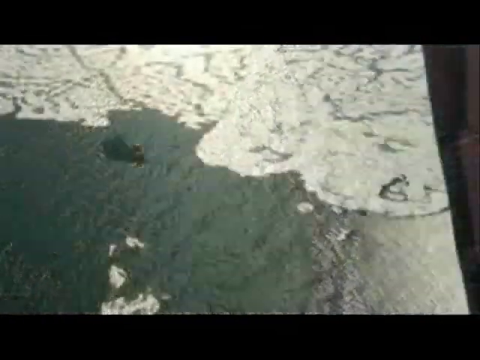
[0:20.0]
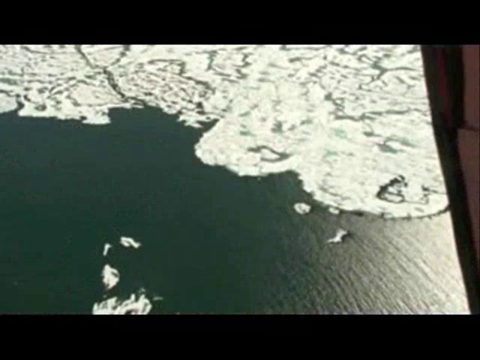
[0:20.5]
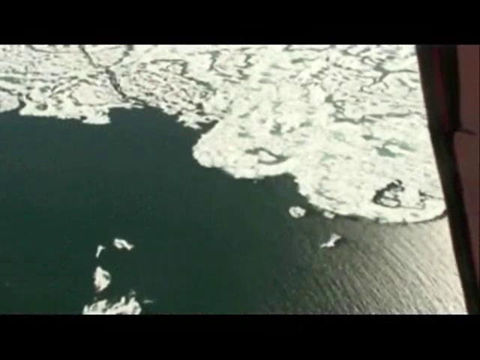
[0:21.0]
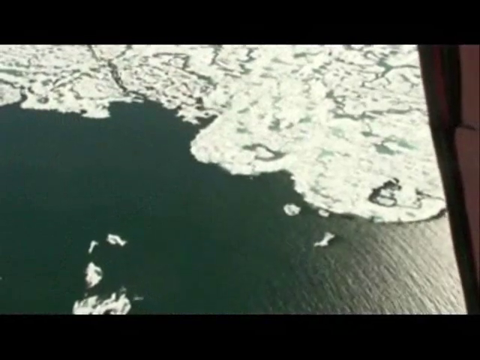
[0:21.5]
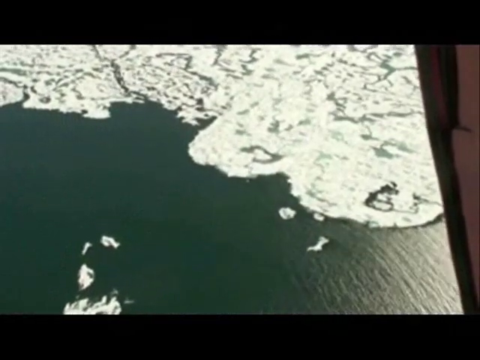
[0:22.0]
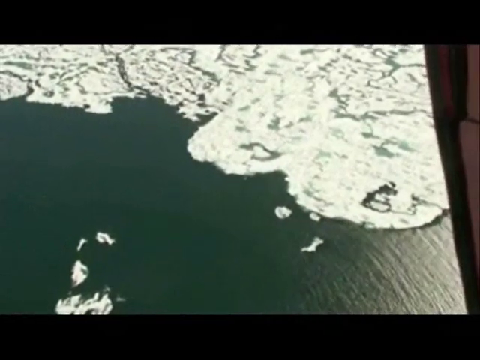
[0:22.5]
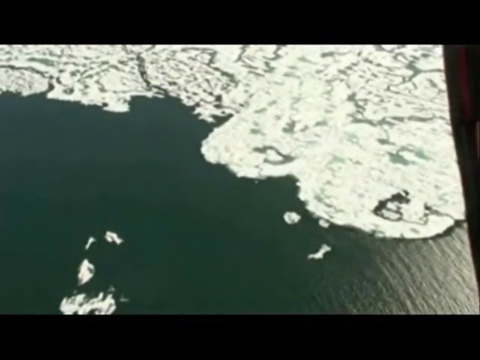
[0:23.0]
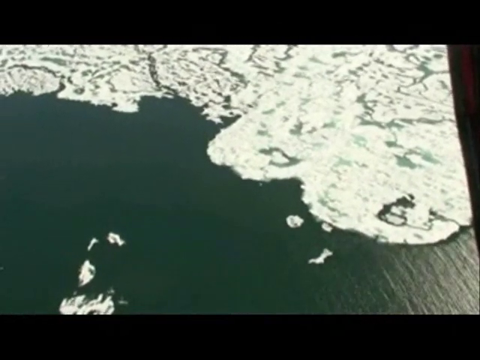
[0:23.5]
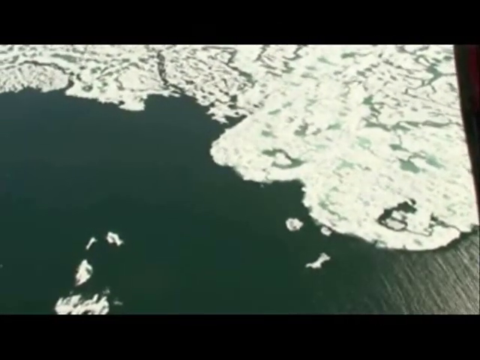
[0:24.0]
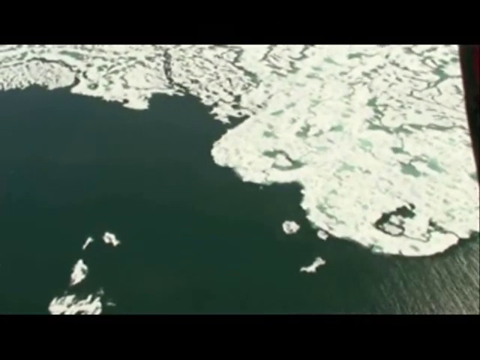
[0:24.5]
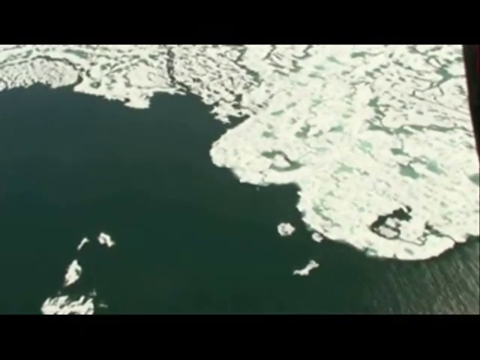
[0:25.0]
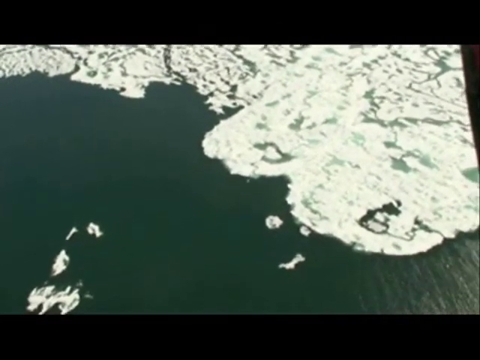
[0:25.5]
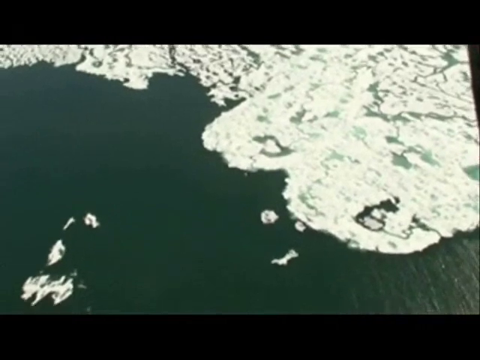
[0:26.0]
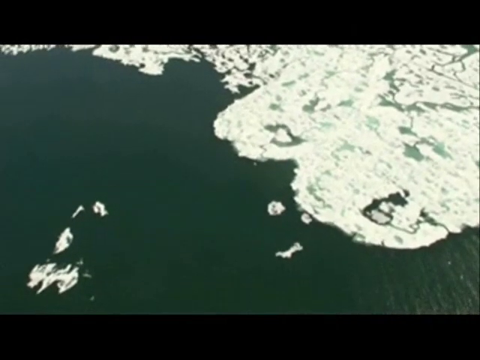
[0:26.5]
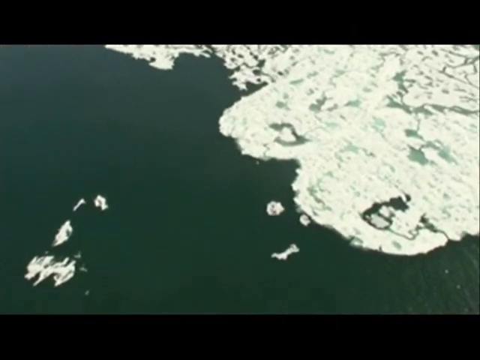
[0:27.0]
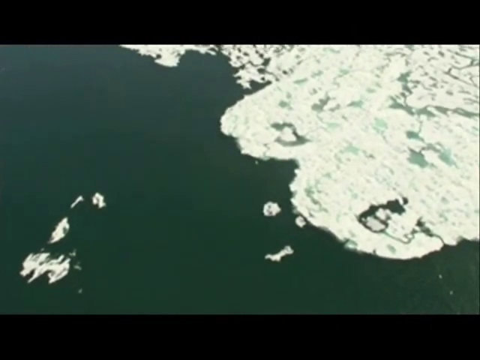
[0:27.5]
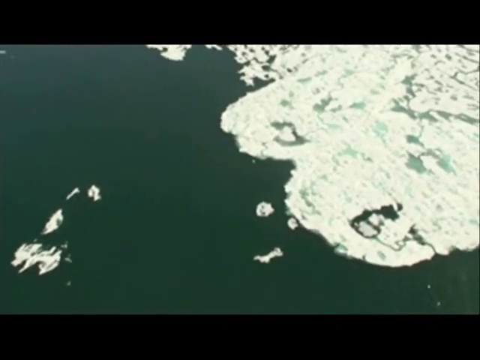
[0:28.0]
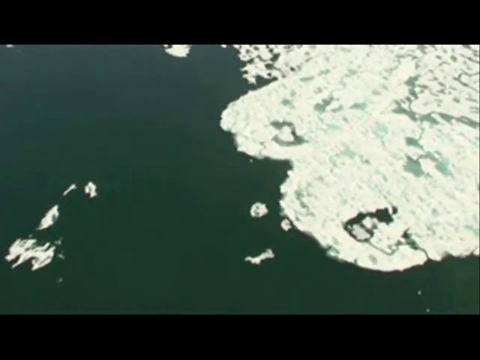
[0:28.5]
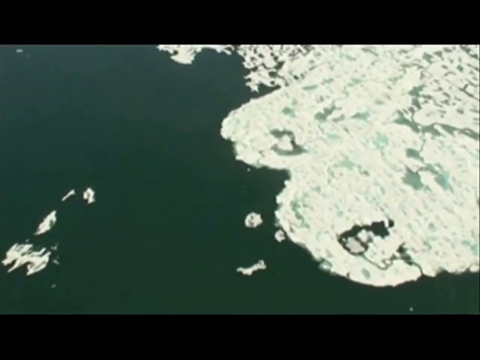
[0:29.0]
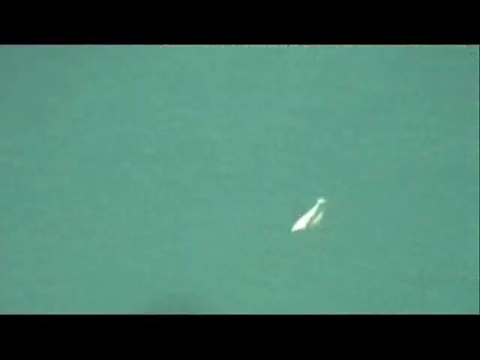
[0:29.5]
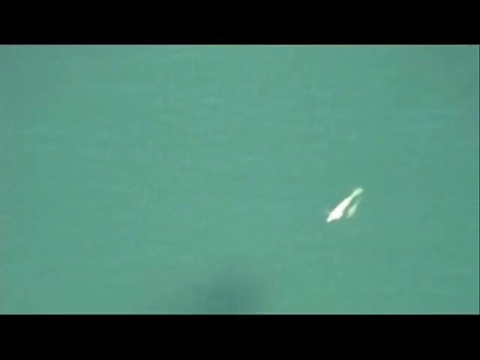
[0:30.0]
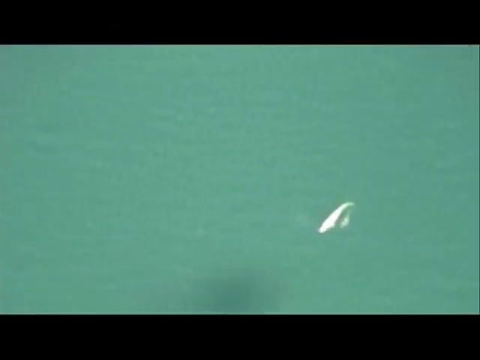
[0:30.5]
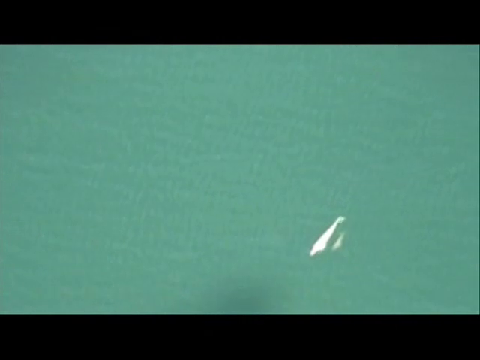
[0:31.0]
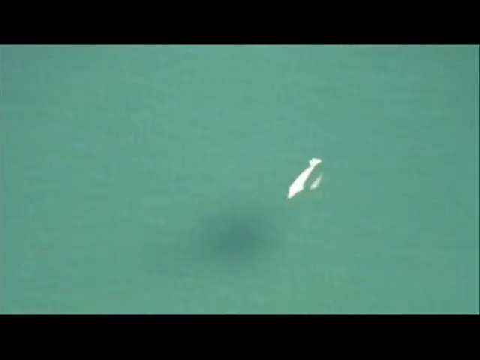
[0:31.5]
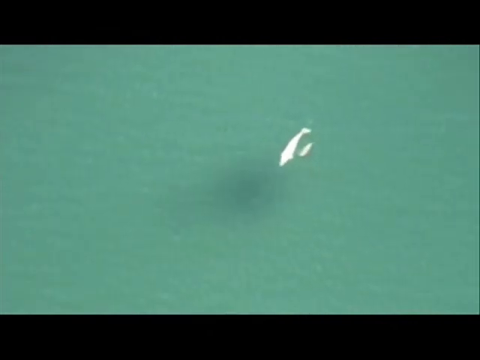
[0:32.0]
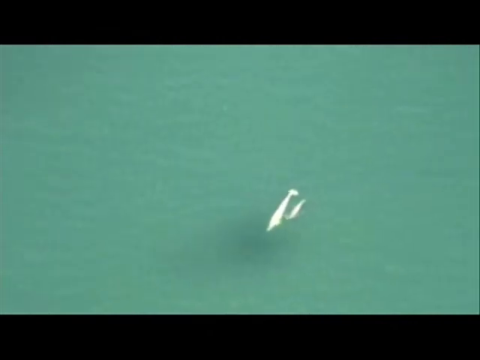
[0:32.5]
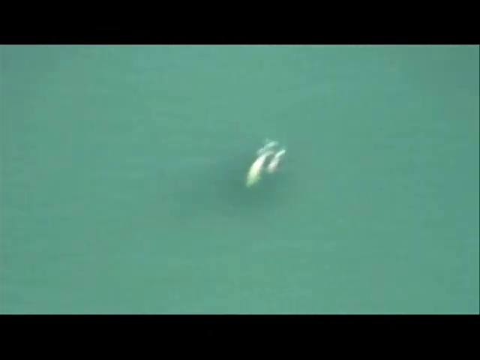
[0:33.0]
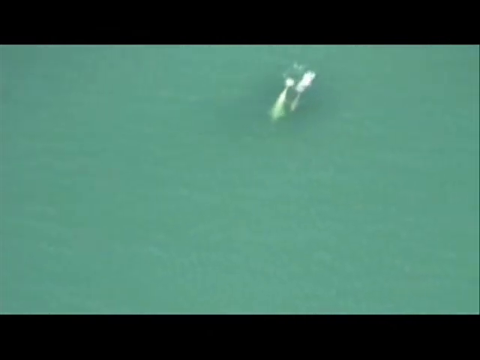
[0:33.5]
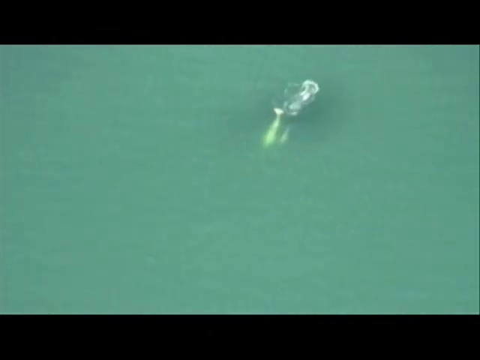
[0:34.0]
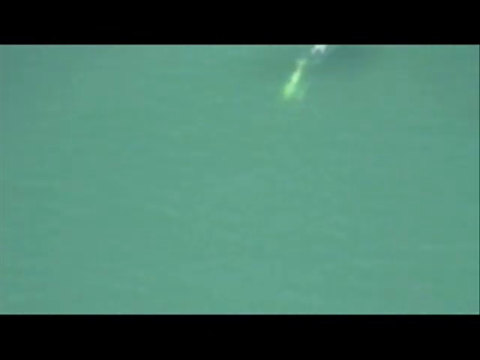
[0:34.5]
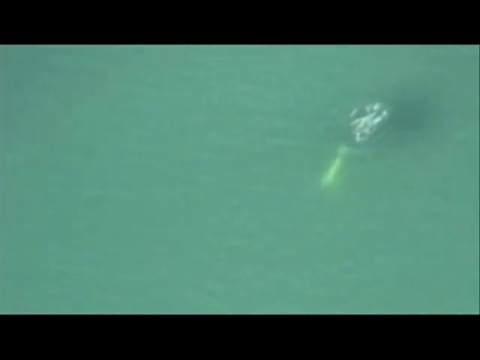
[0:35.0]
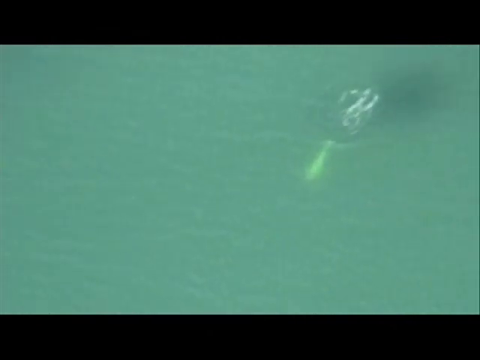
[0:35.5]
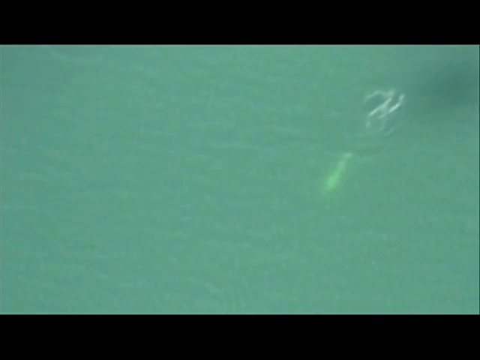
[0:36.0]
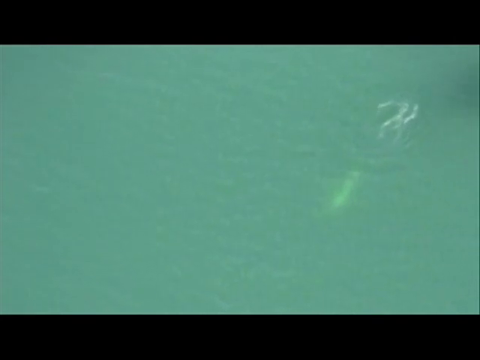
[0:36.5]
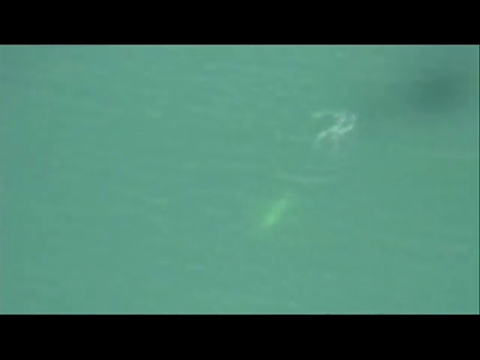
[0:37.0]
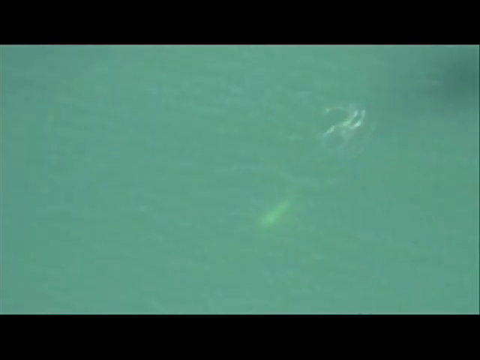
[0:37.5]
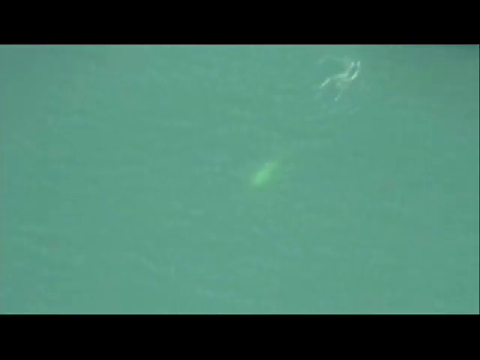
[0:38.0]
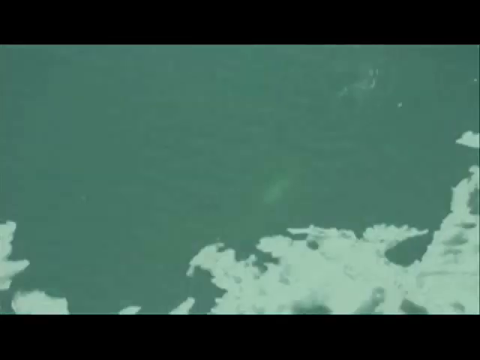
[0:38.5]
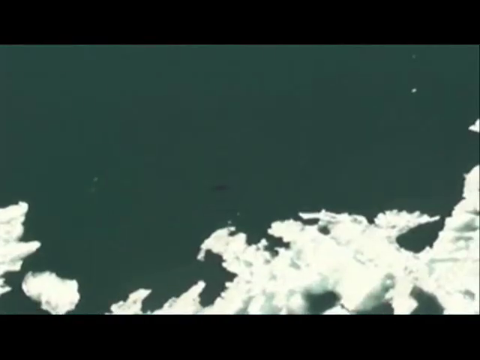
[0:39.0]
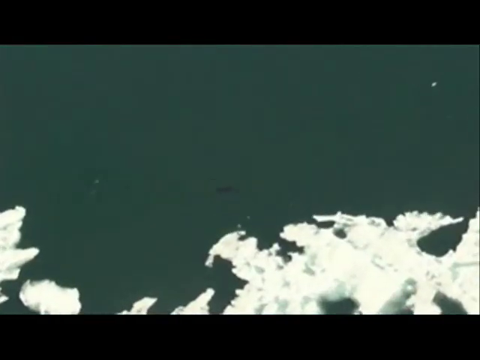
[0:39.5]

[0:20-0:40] An aerial shot shows a snowy area with water, dark in the lower portion of the picture and whiter from the snow in the upper right-hand corner. Whales in the water come to the surface, arc, and flip back down, revealing a whale's tail, which is really large. As the shot continues, white islands are out in the water in the lower left-hand corner. There appears to be possibly a mother whale with a baby whale beside it, as one looks quite a bit smaller. The aerial shot almost looks like it is turning slightly, as if someone is filming out the window of an airplane or helicopter.